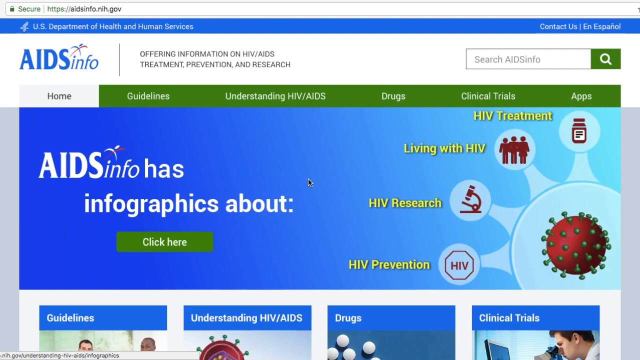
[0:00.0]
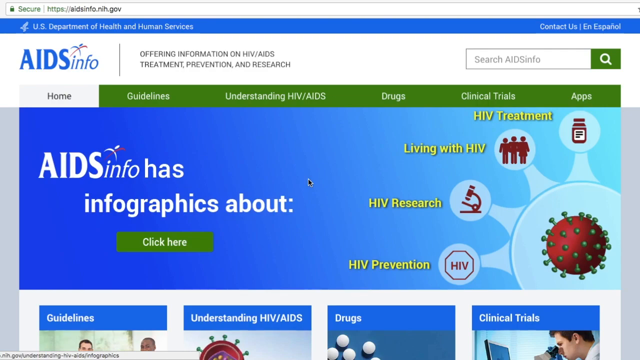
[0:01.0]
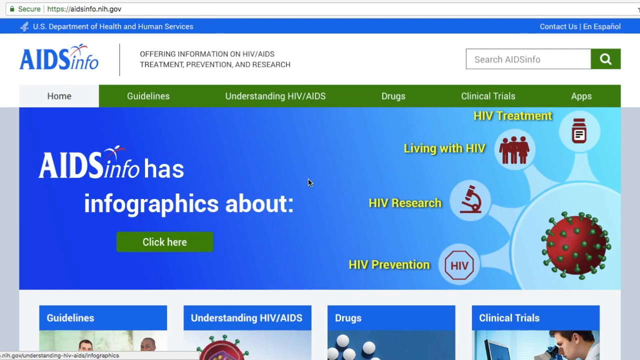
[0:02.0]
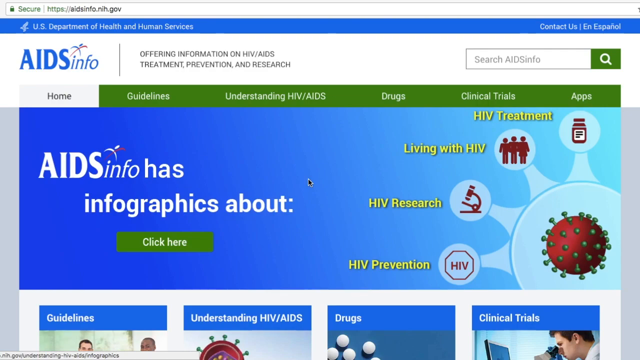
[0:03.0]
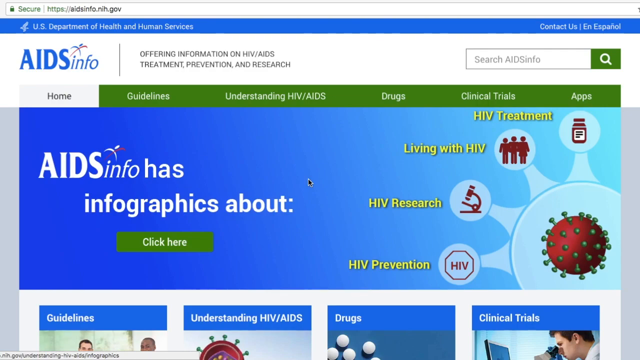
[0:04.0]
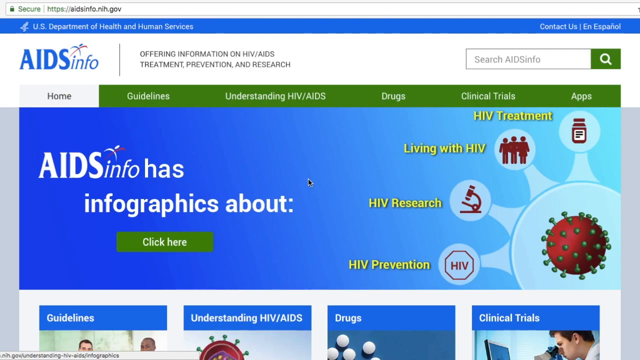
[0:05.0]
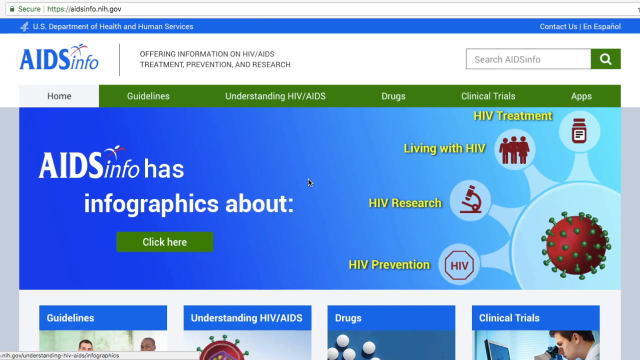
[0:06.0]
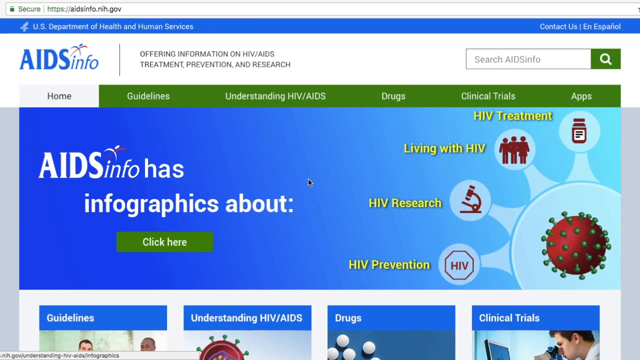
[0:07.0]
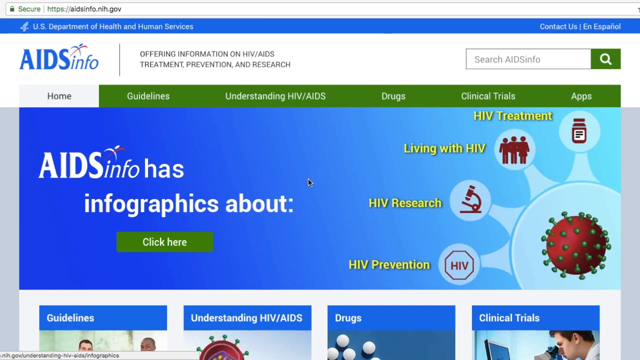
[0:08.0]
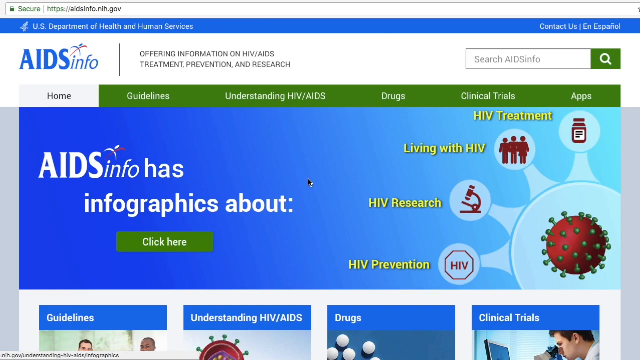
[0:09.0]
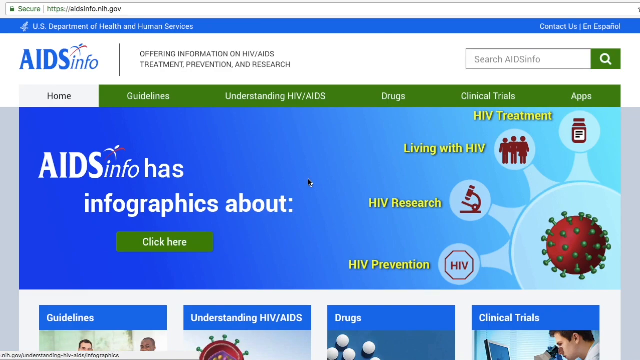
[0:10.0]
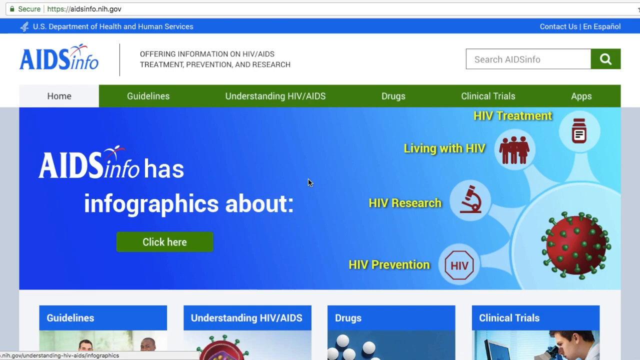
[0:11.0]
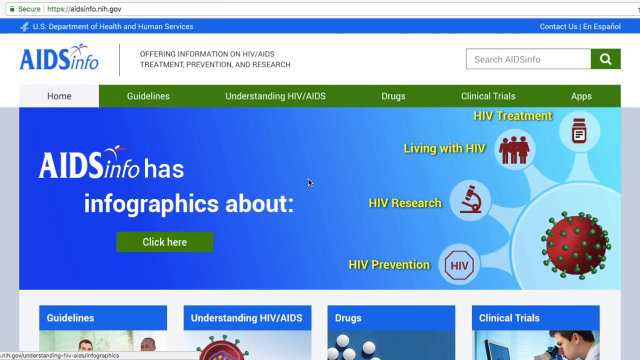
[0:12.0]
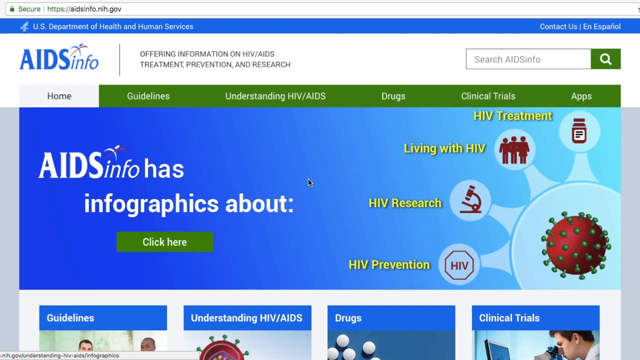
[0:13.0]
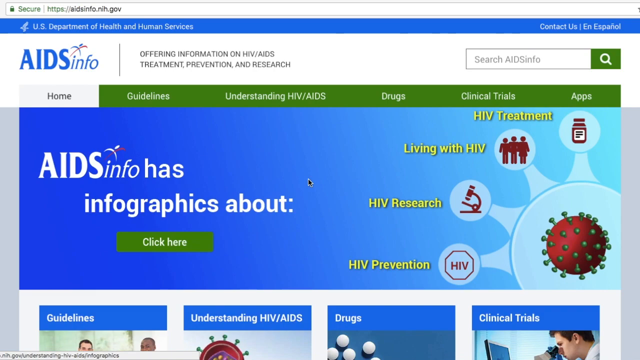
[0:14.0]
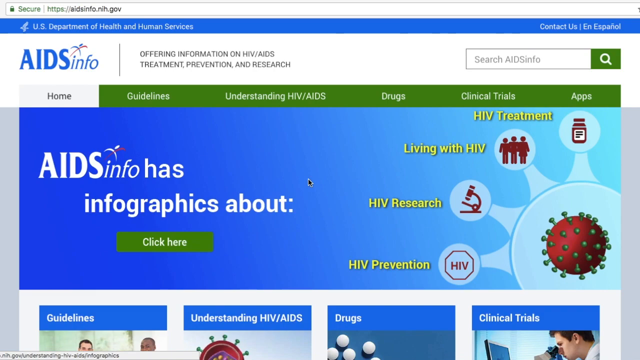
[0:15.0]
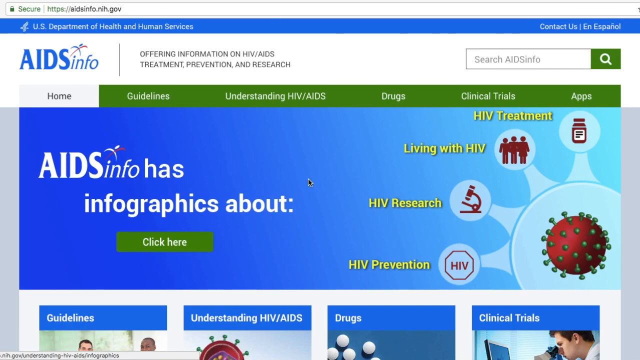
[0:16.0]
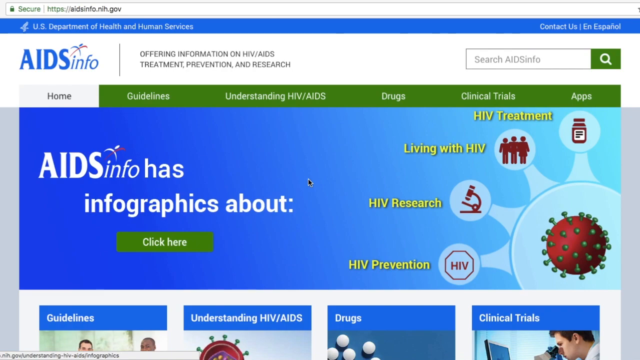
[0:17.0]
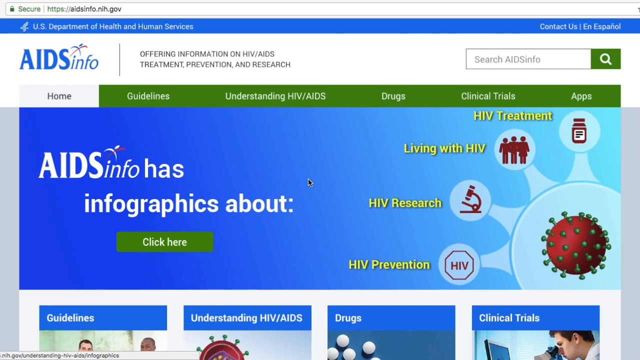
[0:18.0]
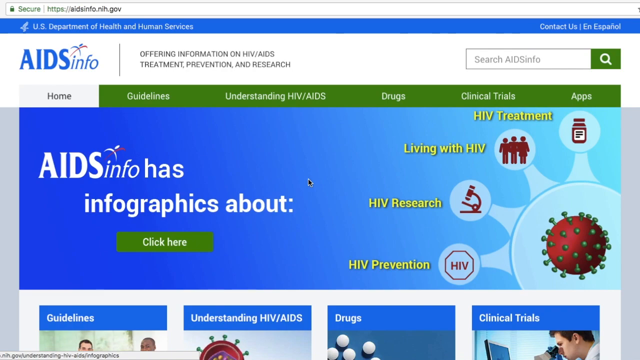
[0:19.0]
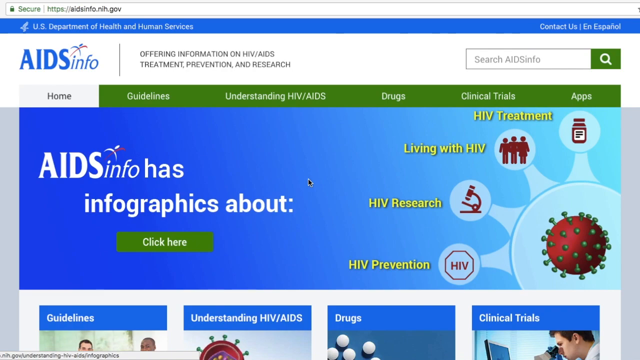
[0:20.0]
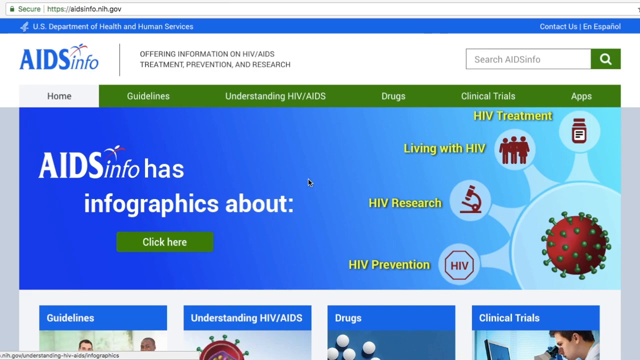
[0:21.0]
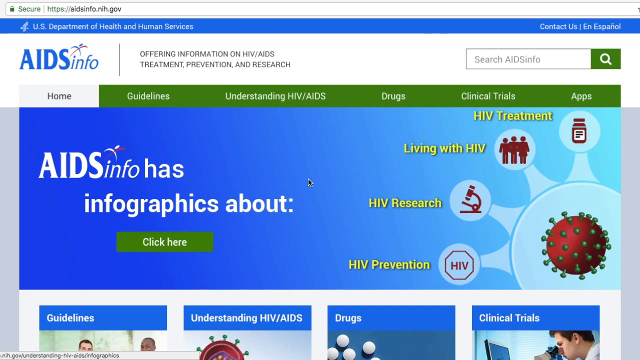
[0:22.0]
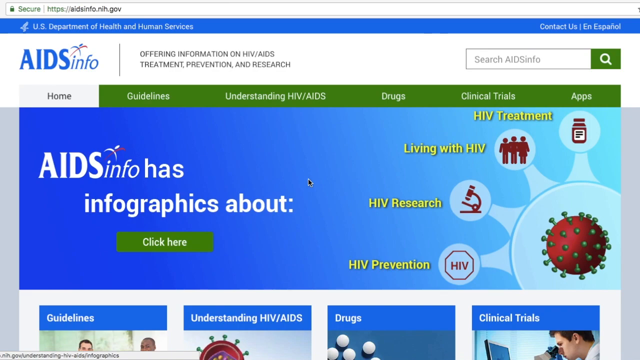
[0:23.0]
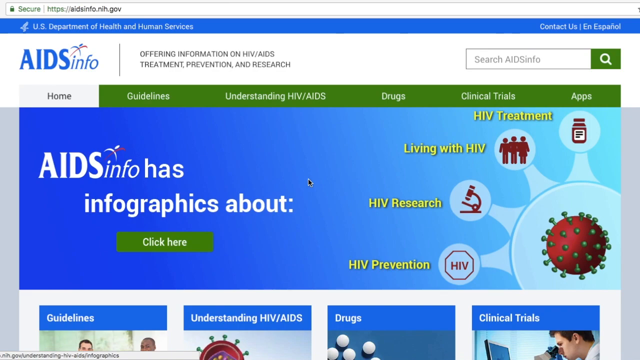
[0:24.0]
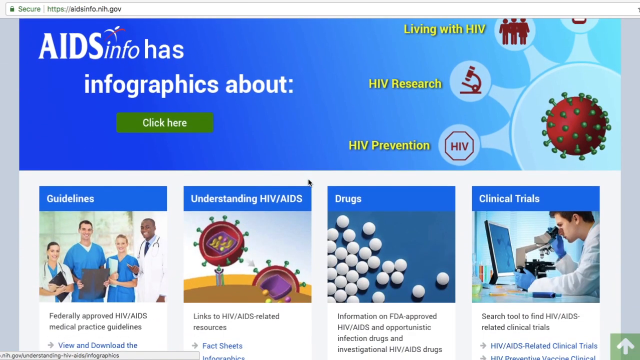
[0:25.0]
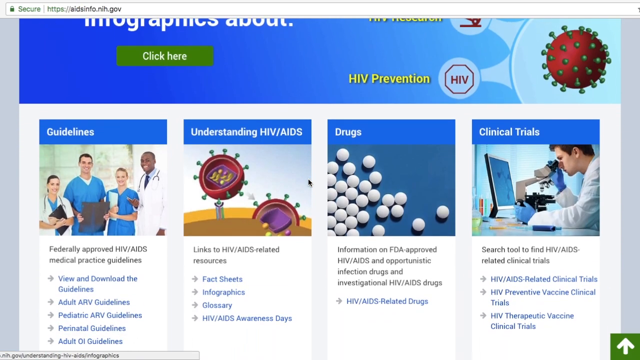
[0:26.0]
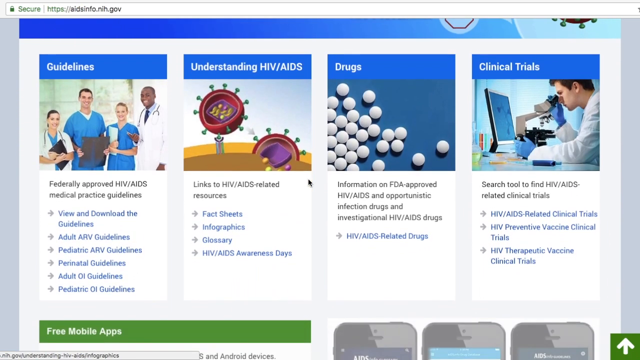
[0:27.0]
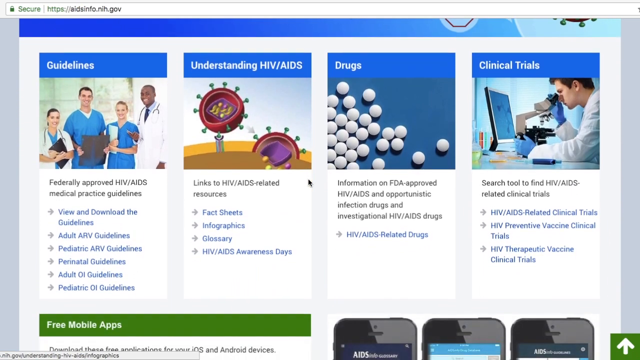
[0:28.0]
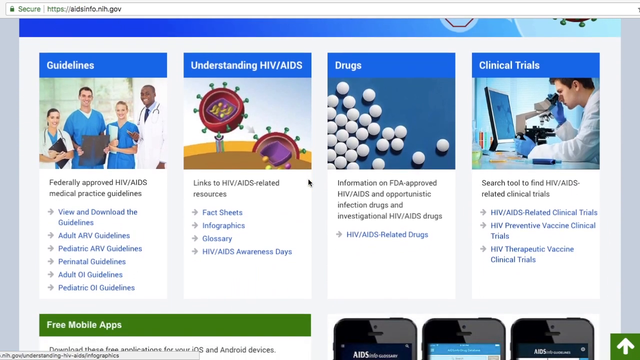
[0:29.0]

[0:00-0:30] A web page on the website AIDSinfo.nih.gov is shown. A blue bar at the top reads "U.S. Department of Health and Human Services," and on the right-hand side of that bar are the words "Contact Us" and "en Español." Below that on the left it reads "AIDS info," and in the center it says "Offering Information on HIV AIDS Treatment, Prevention, and Research." On the right-hand side is a search bar that says "Search AIDS info," with a green magnifying glass. Below that, from left to right, is a row of tabs: "Home" in white, then green tabs for "Guidelines," "Understanding HIV, AIDS," "Drugs," "Clinical Trials," and "Apps." The main part of the screen has a blue background. On the right-hand side, white text reads "AIDS info, has infographics about," and below that is a green "Click Here" button. To the right is a stylized drawing of a cell labeled, from bottom to top, "HIV Prevention," "HIV Research," "Living with HIV," and "HIV Treatment," with four spikes coming out that relate to the four subjects. The cell itself is a round white nucleus with a red ball inside that has spikes coming out of it. The page then scrolls up to the next page.